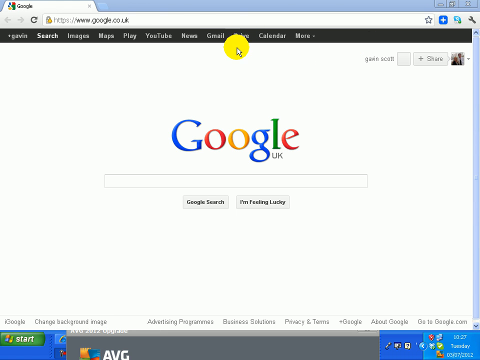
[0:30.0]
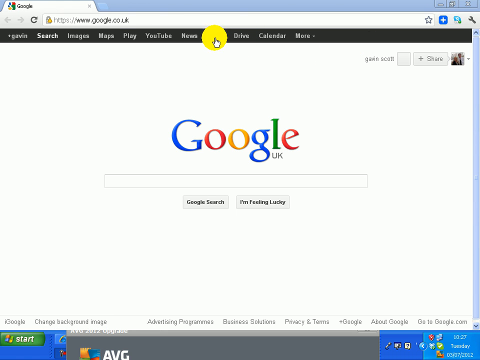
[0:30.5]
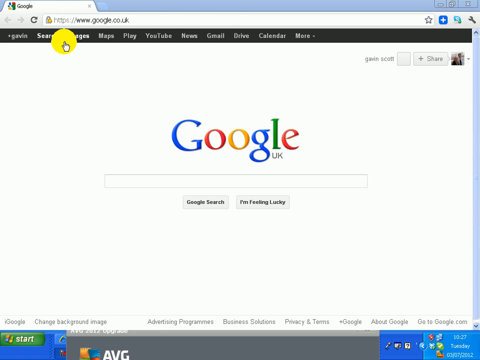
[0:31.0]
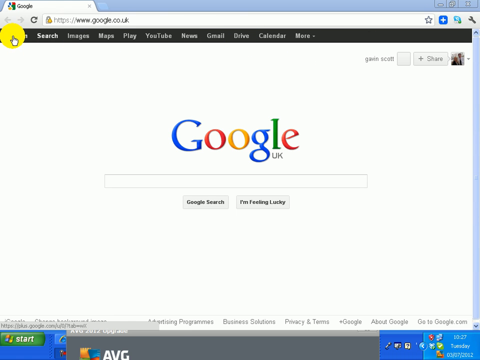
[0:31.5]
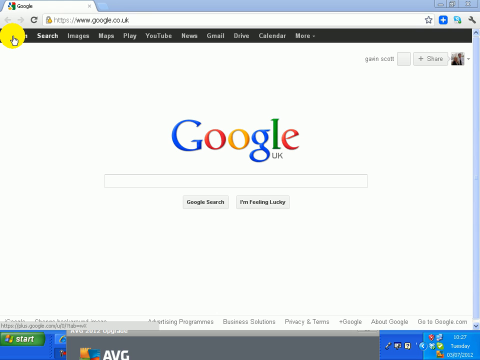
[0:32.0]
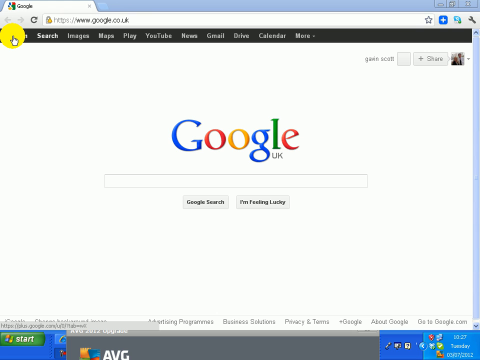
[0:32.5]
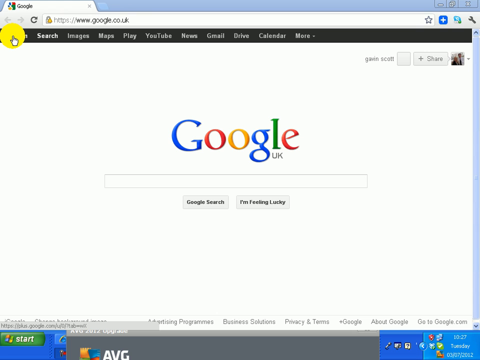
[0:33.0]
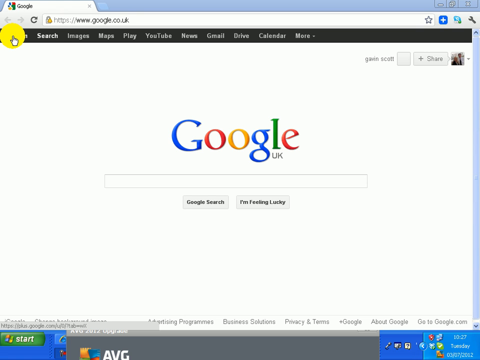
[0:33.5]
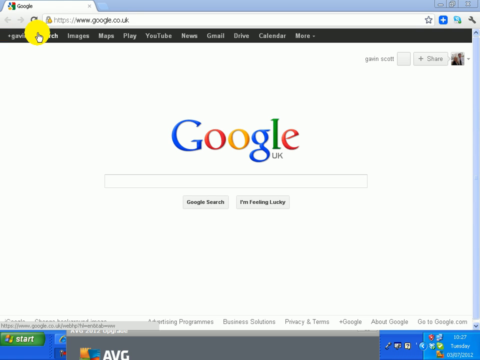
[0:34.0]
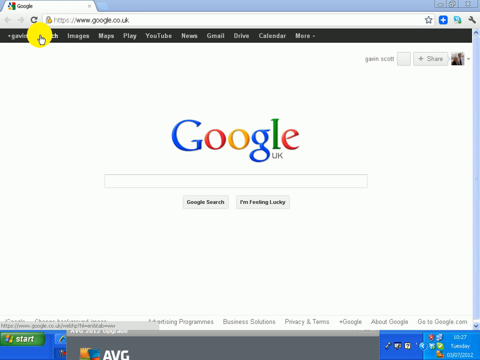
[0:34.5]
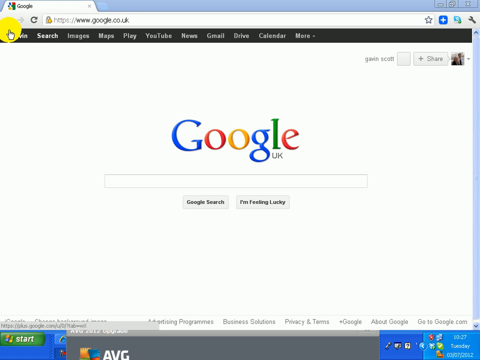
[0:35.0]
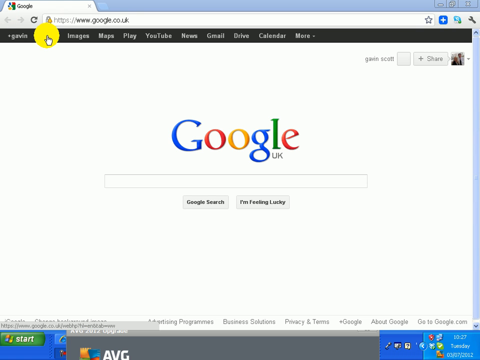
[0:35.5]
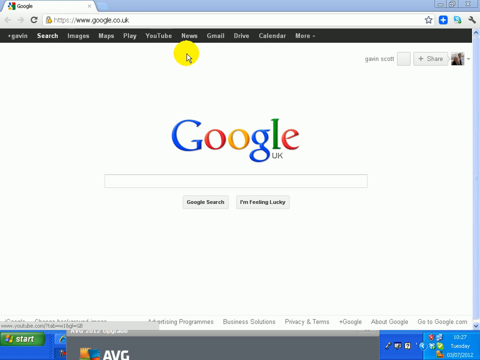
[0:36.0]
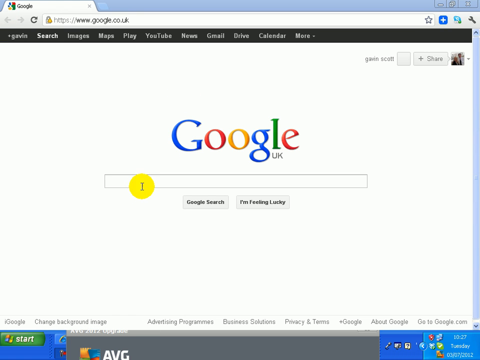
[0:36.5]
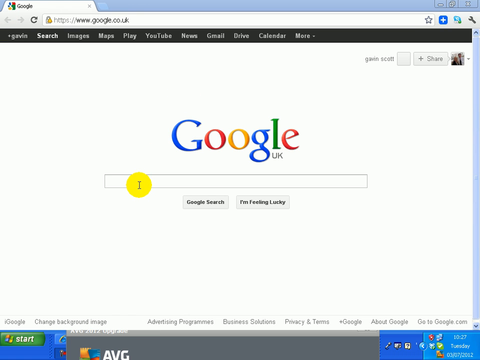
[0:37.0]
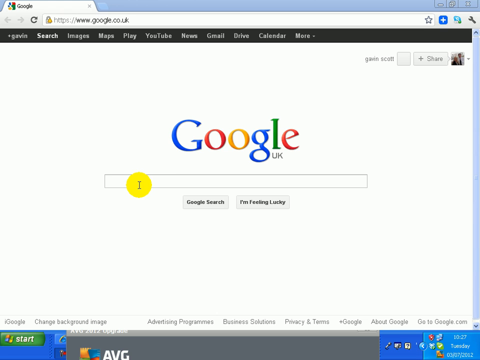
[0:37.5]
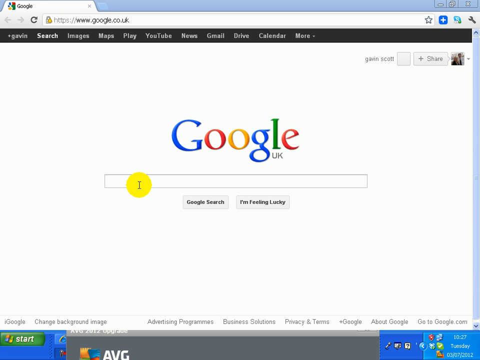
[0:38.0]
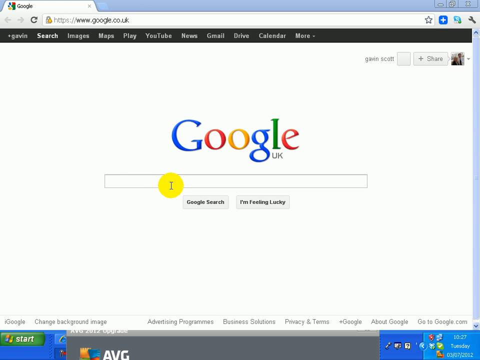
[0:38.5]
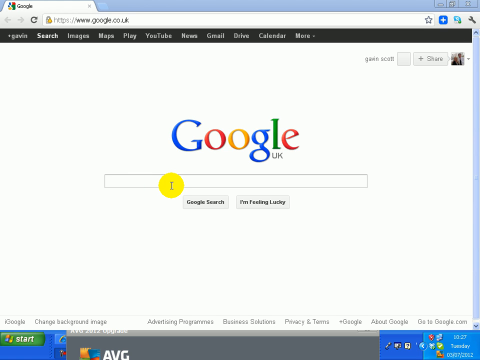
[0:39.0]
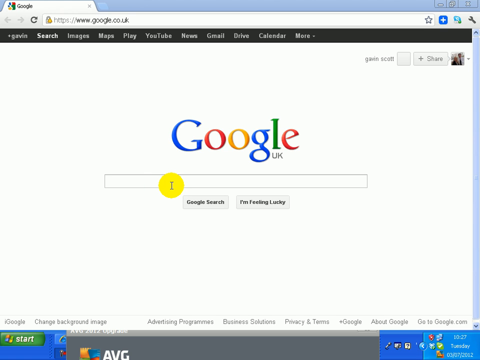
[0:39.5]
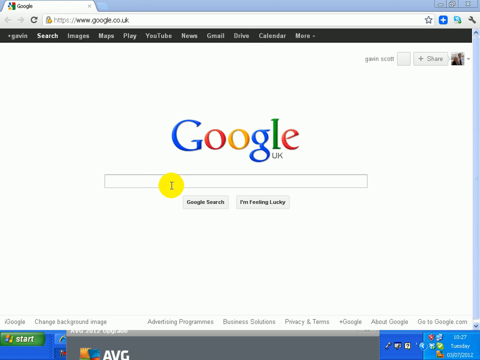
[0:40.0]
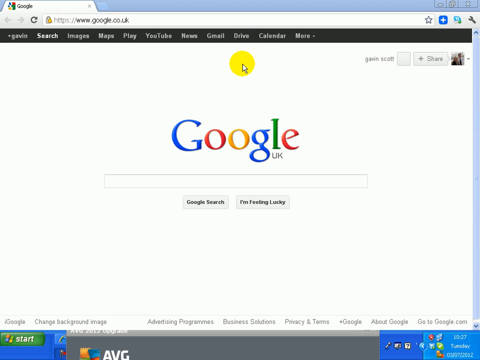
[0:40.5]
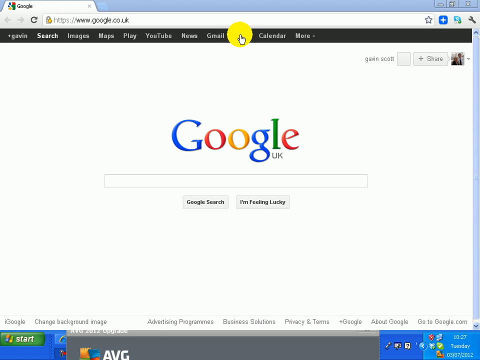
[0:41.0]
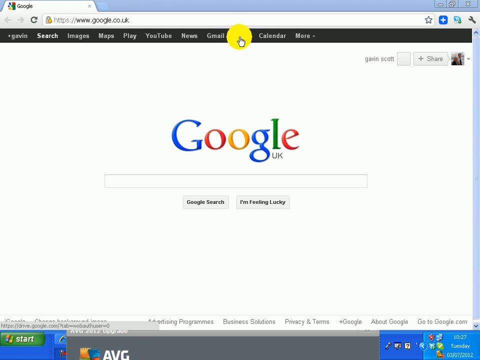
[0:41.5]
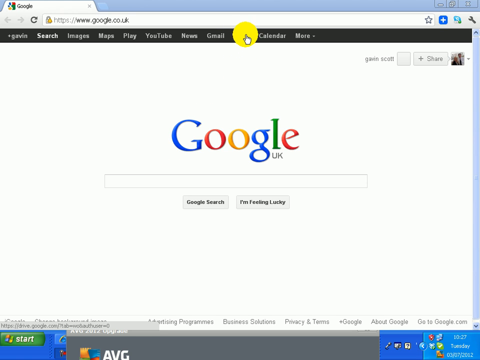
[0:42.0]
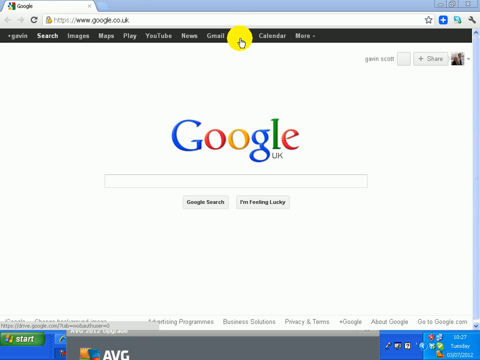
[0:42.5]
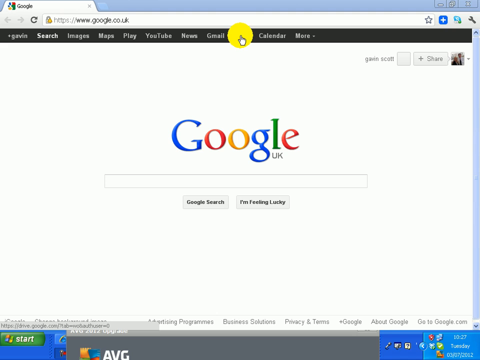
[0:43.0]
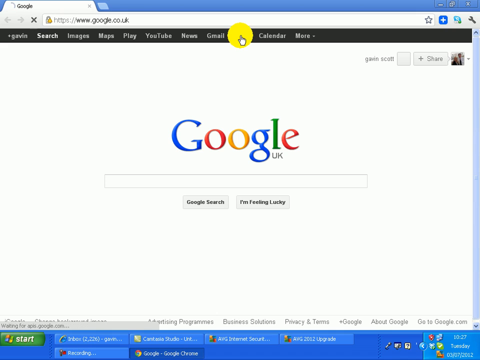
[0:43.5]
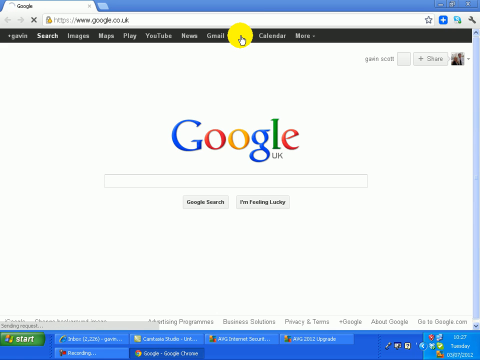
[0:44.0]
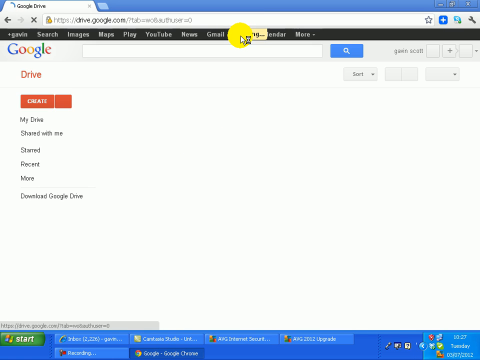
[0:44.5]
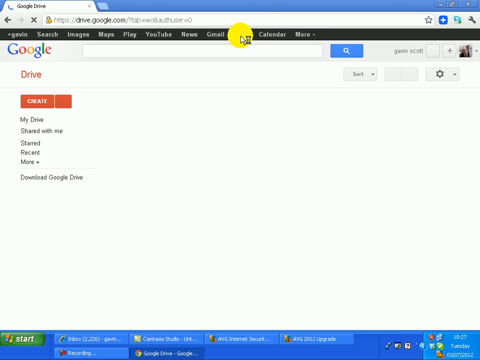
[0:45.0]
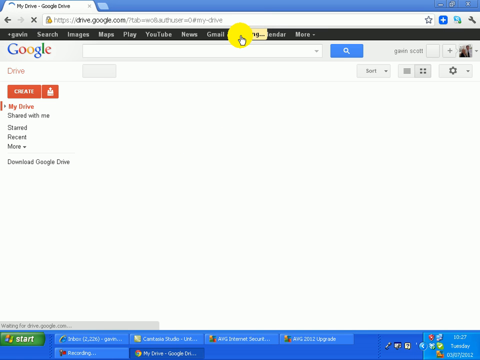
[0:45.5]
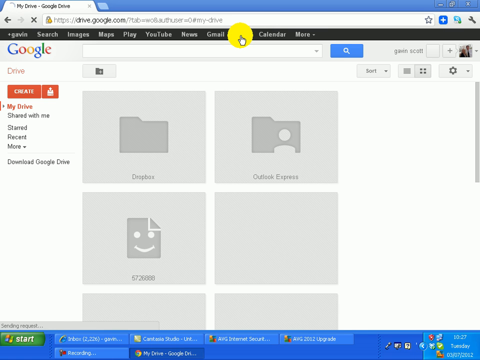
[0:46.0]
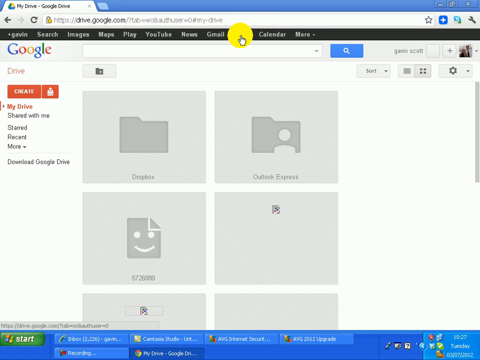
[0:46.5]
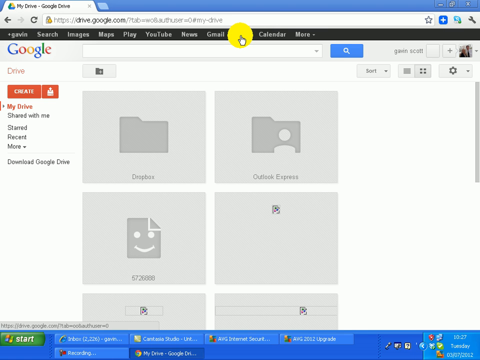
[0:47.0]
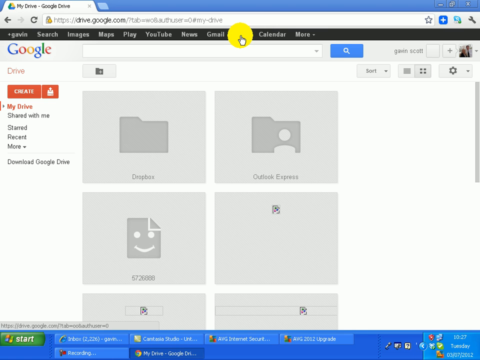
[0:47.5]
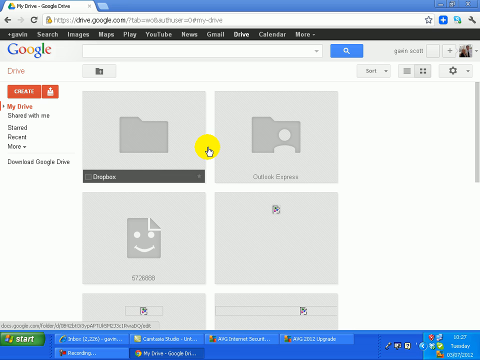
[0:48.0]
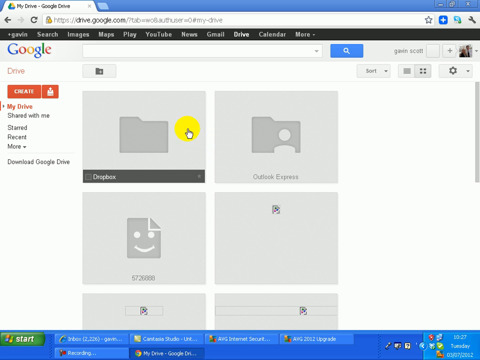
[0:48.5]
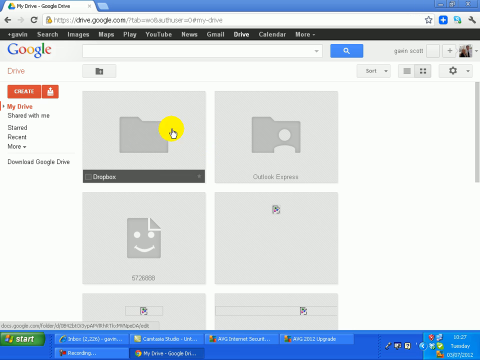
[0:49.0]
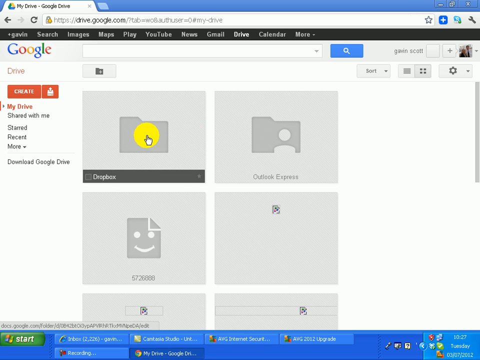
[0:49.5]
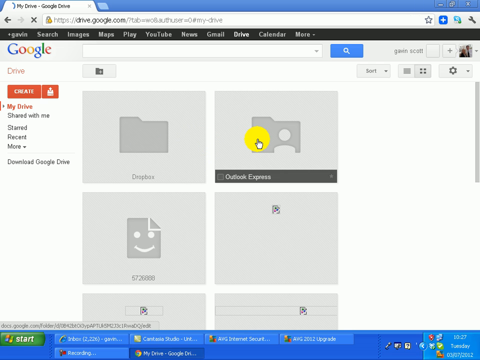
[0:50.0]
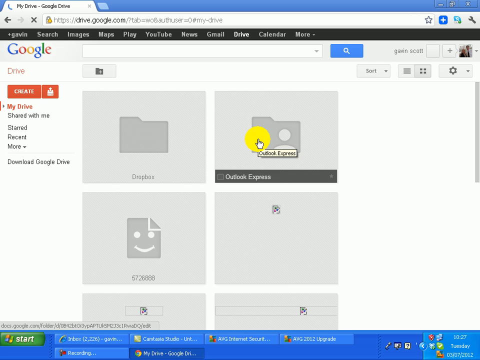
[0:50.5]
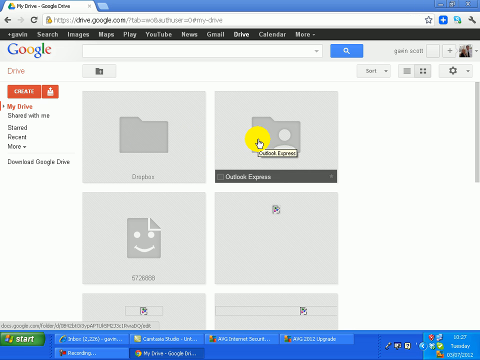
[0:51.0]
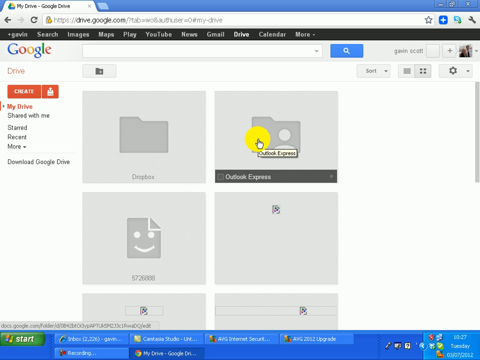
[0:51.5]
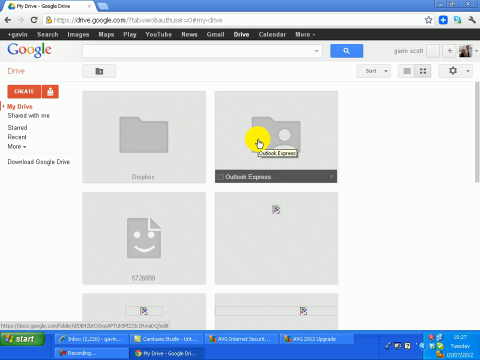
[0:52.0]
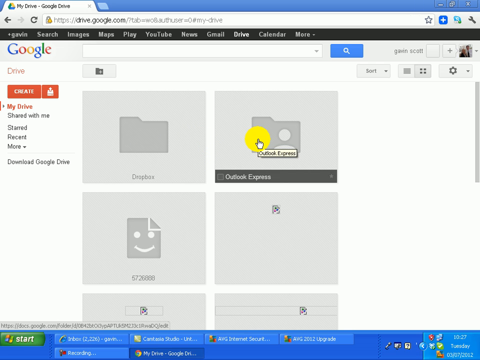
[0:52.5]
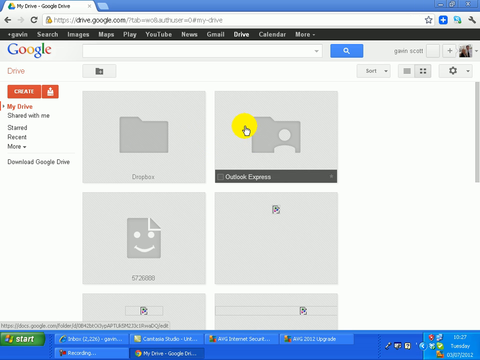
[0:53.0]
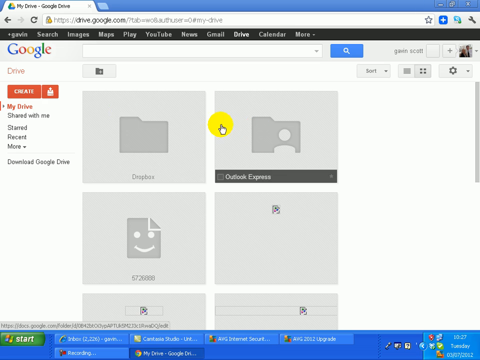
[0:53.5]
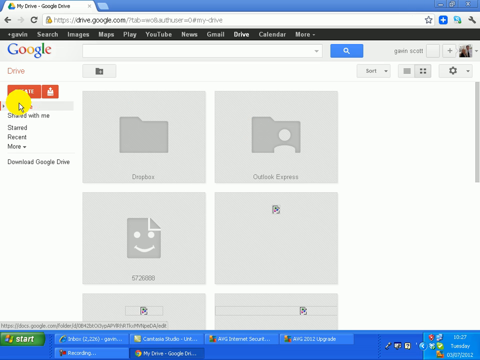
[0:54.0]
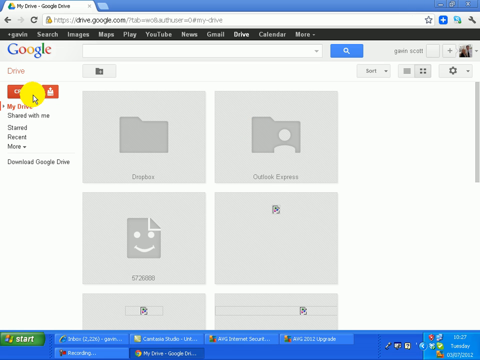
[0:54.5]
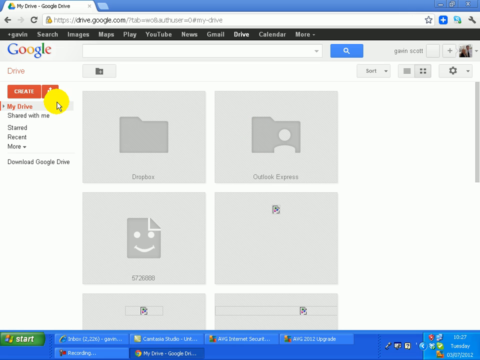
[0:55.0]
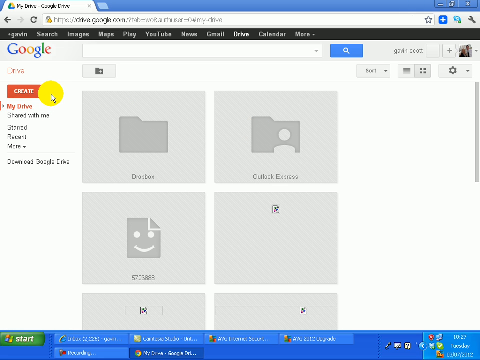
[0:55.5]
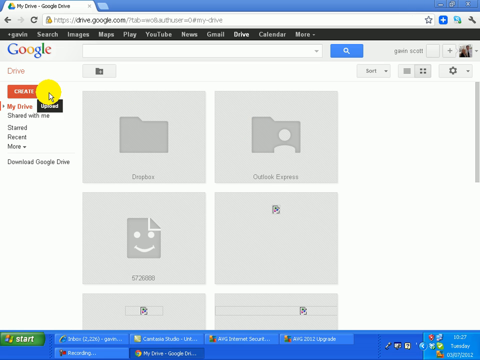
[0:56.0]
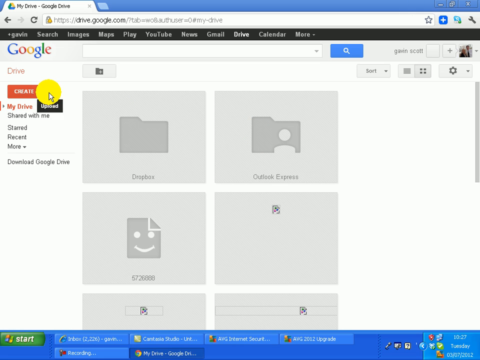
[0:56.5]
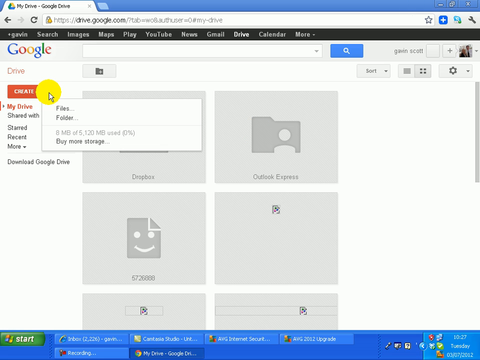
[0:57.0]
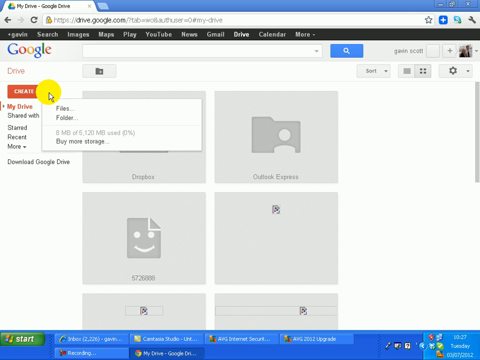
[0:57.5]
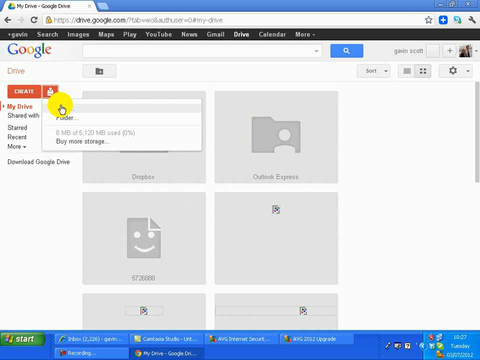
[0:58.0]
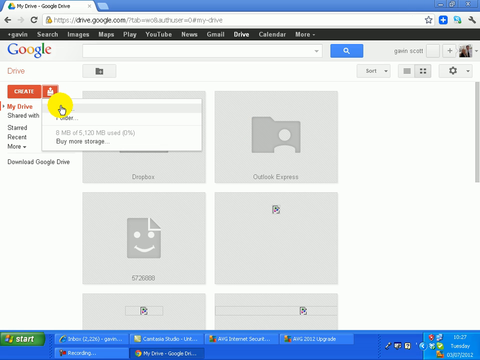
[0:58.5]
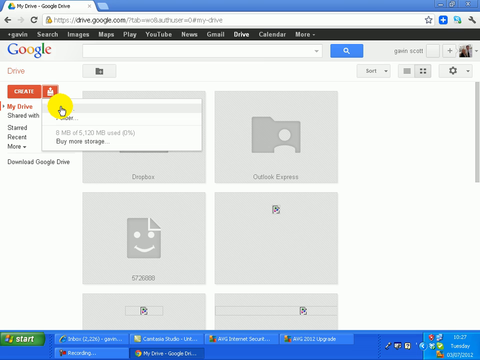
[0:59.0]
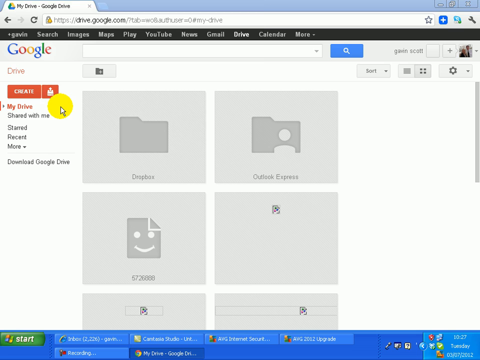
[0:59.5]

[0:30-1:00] On a Google screen, the person moves the cursor, with the yellow dot surrounding it, from the top black bar to the Google search. They go to the black taskbar at the top of the screen, then to the search bar, then up to the part just to the right of Gmail, seemingly clicking on it twice, and appear to click on Google Drive. Dropbox, Outlook Express and devices appear, and Dropbox is sort of highlighted. The person then clicks on create and goes to file folder. The yellow circle around the cursor hides a little of what they are doing.